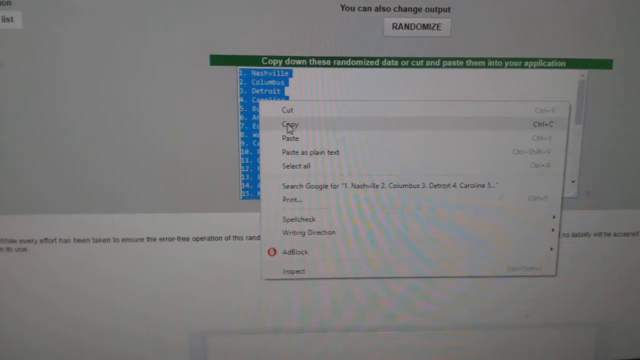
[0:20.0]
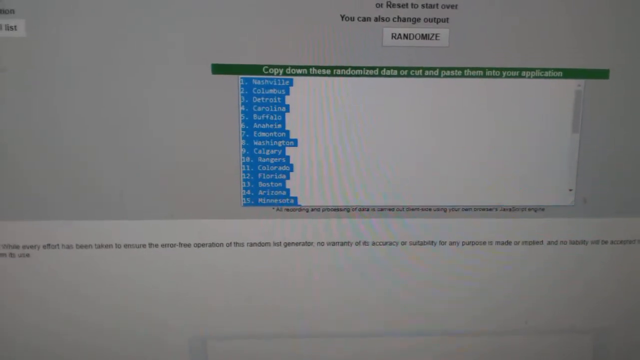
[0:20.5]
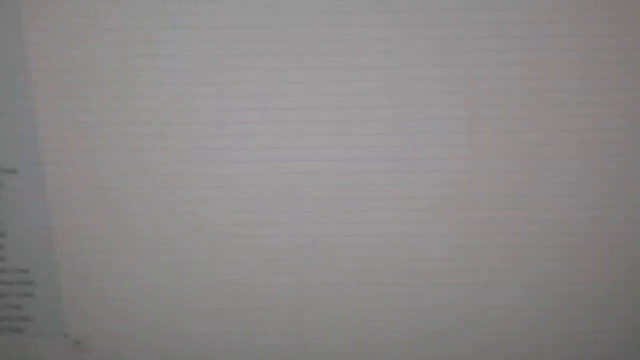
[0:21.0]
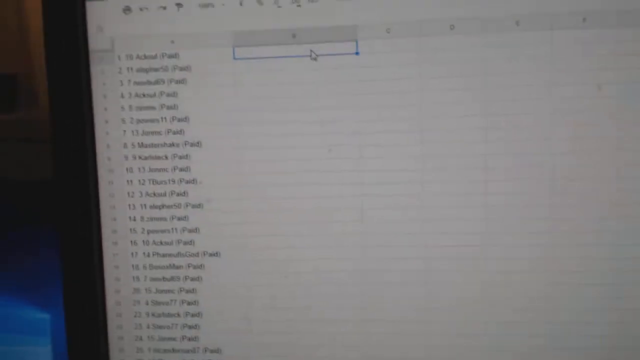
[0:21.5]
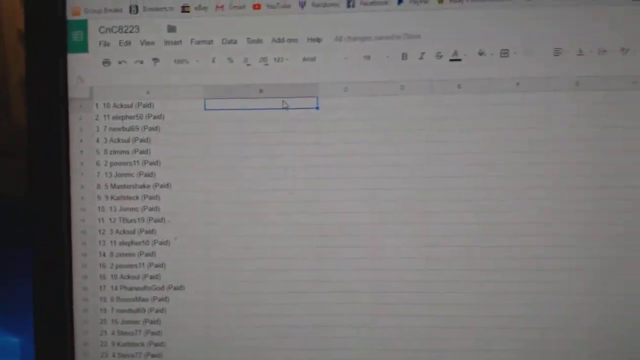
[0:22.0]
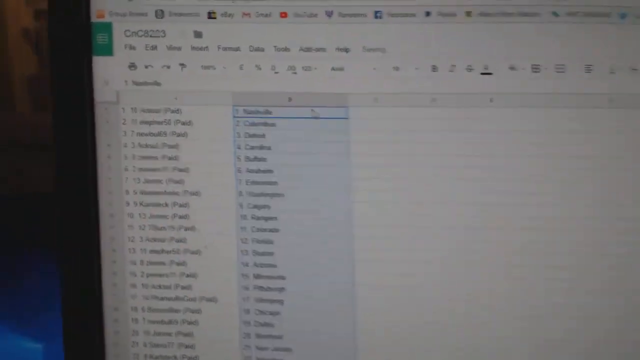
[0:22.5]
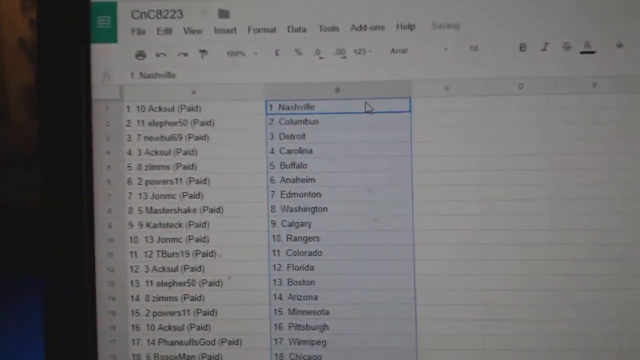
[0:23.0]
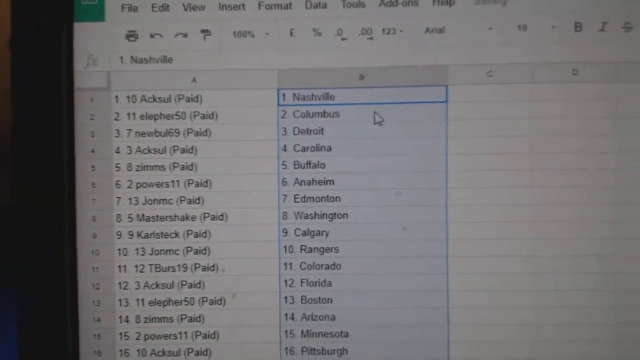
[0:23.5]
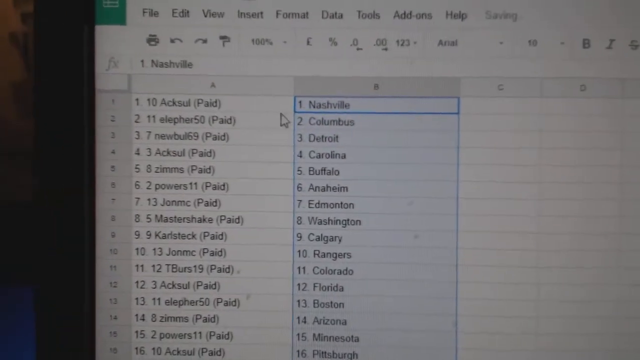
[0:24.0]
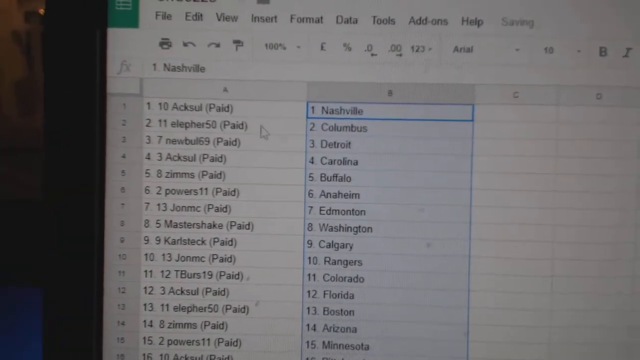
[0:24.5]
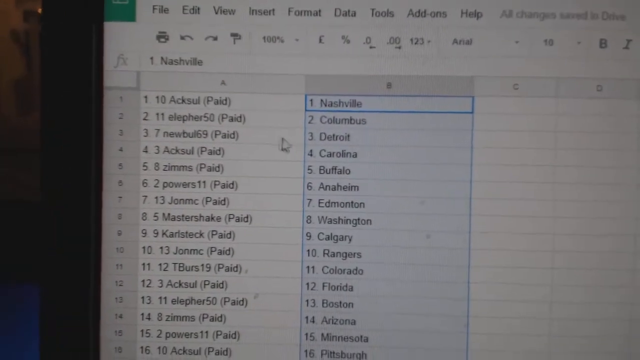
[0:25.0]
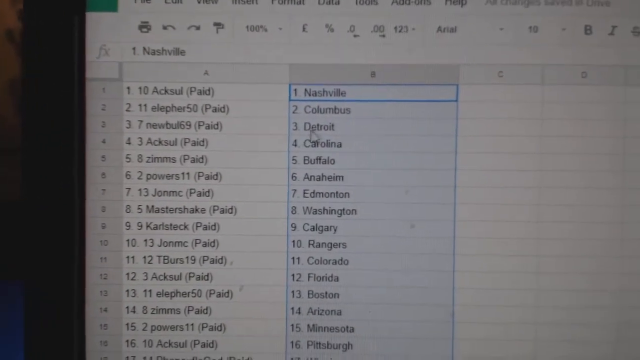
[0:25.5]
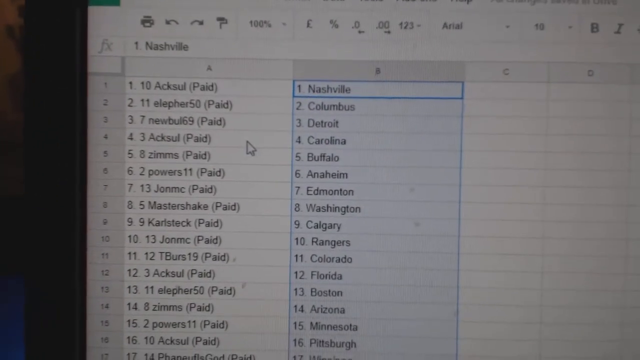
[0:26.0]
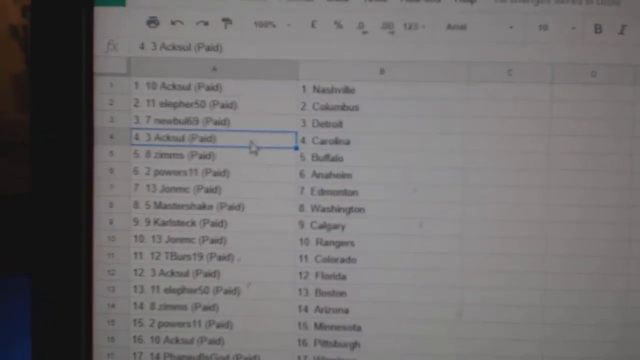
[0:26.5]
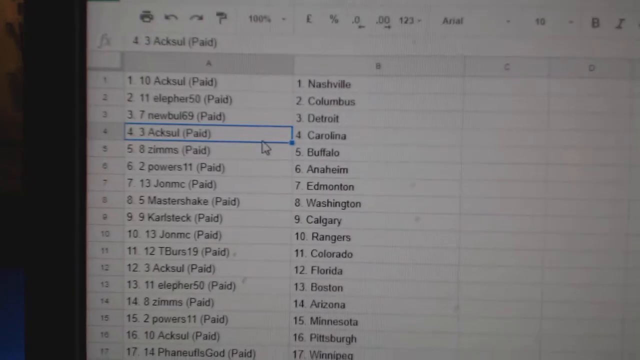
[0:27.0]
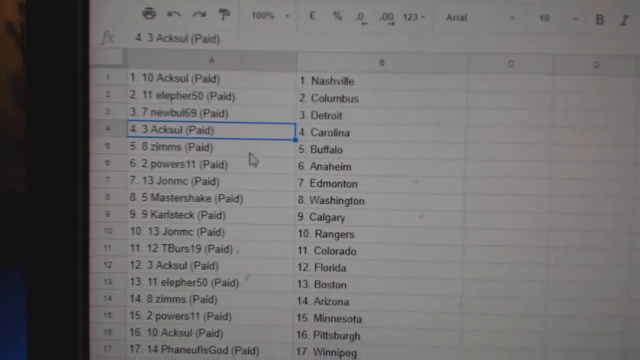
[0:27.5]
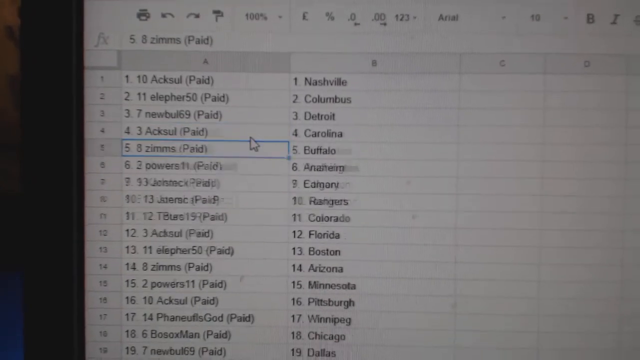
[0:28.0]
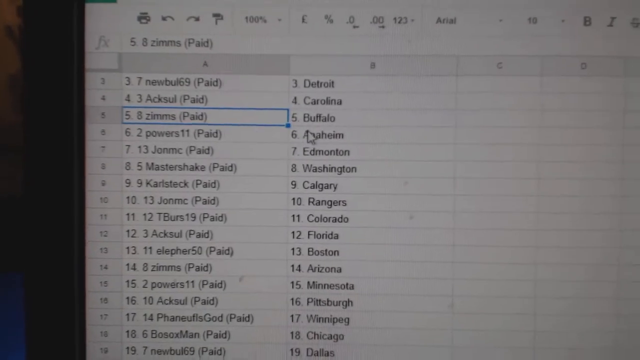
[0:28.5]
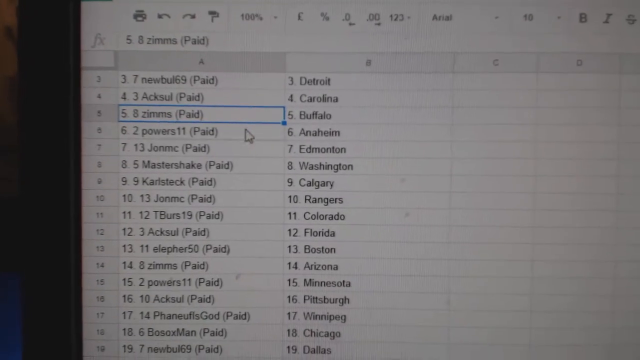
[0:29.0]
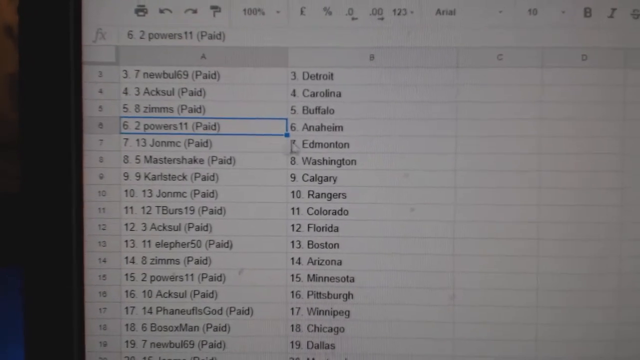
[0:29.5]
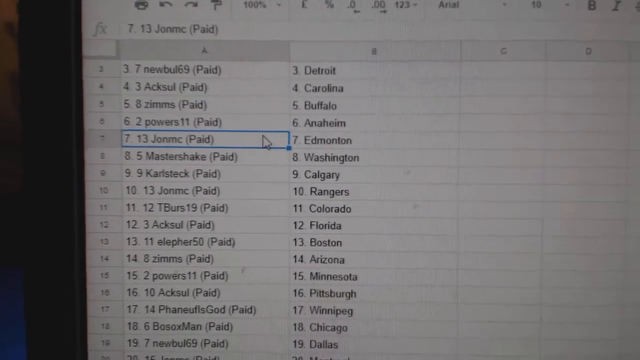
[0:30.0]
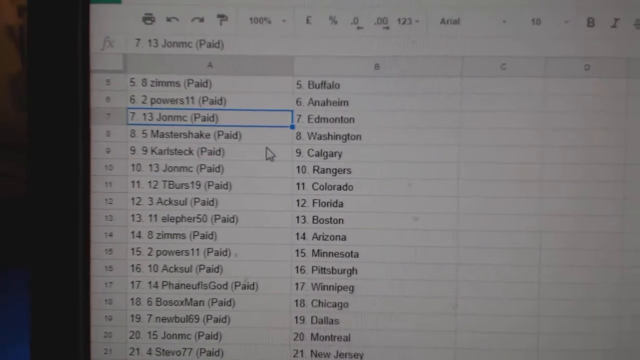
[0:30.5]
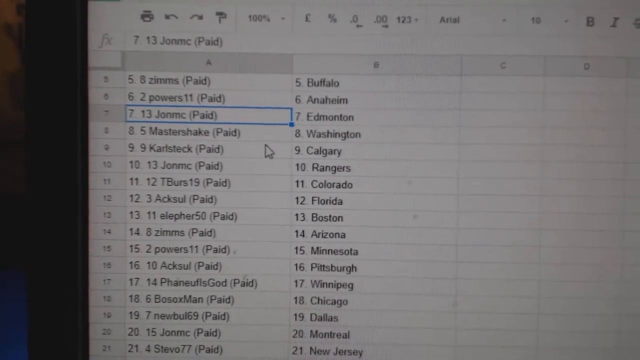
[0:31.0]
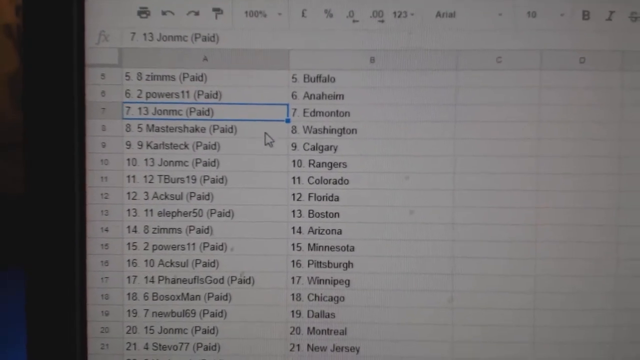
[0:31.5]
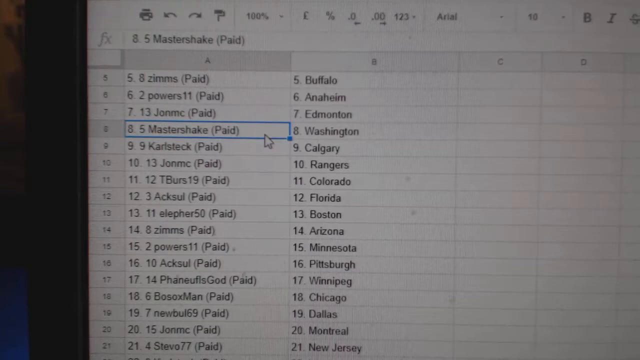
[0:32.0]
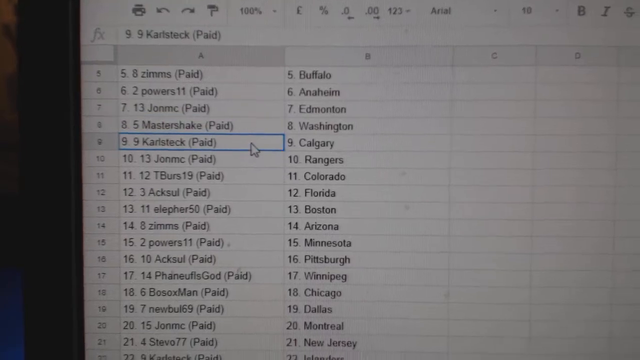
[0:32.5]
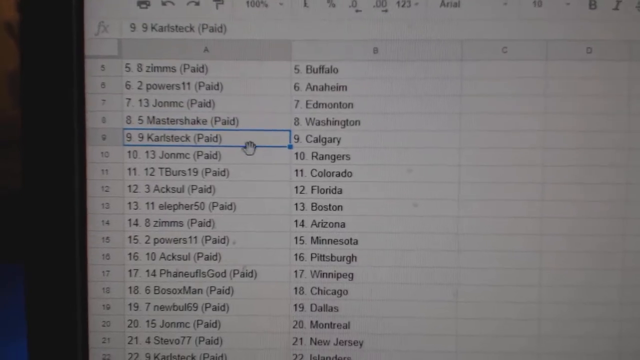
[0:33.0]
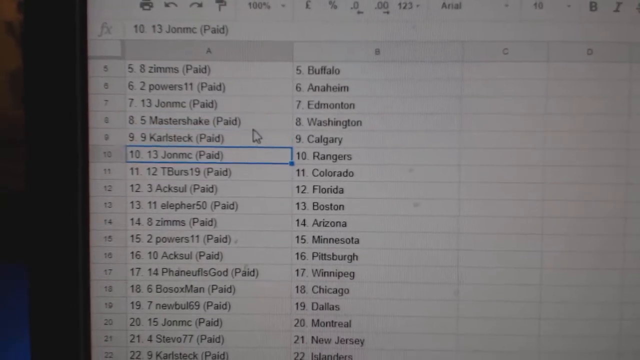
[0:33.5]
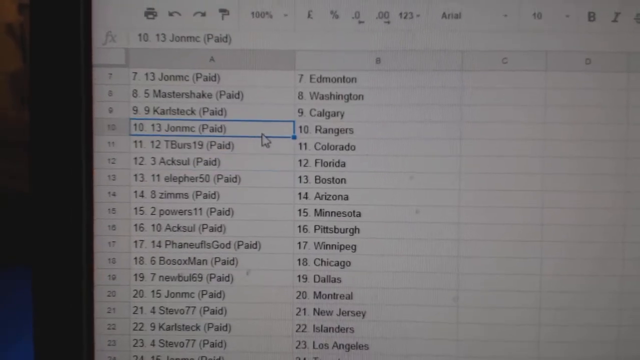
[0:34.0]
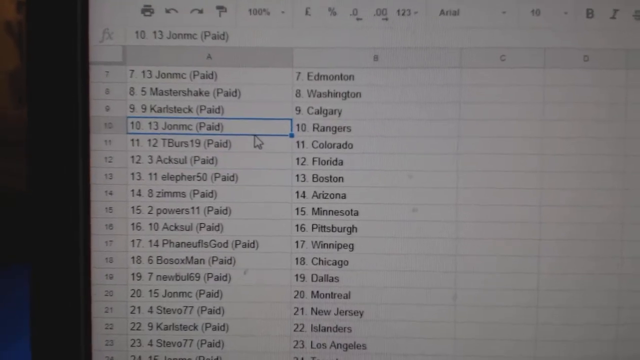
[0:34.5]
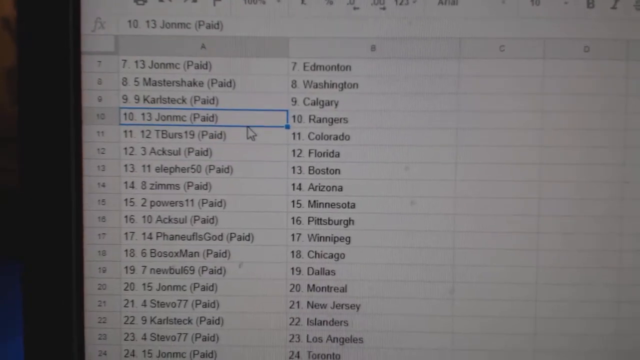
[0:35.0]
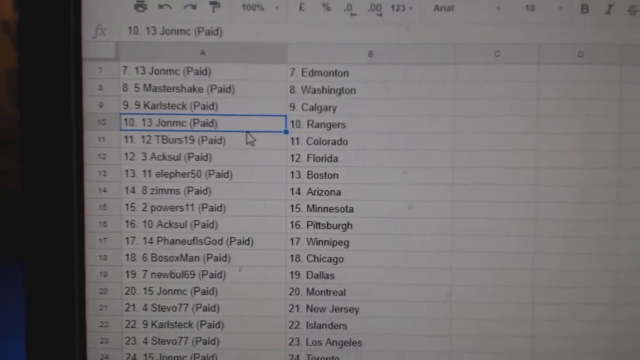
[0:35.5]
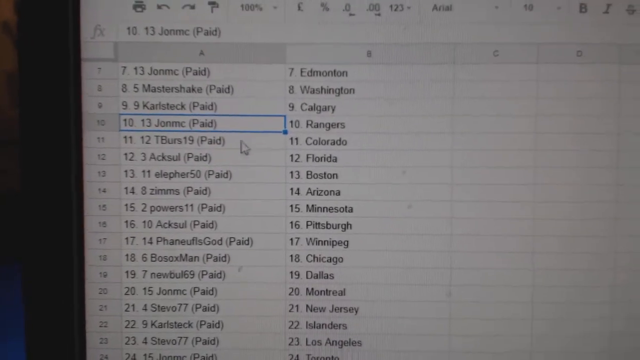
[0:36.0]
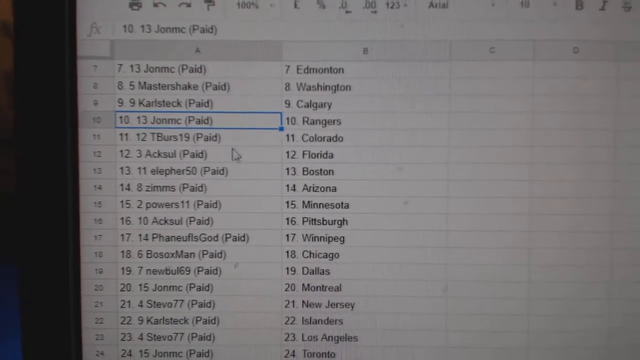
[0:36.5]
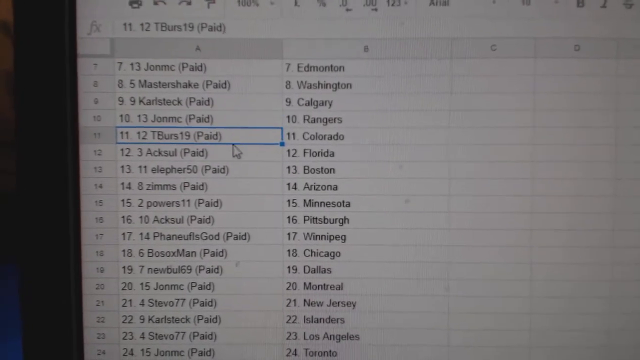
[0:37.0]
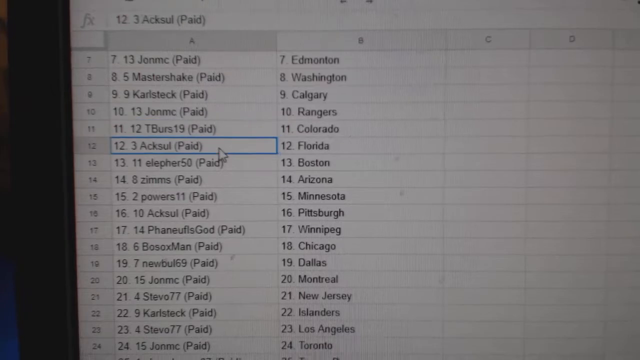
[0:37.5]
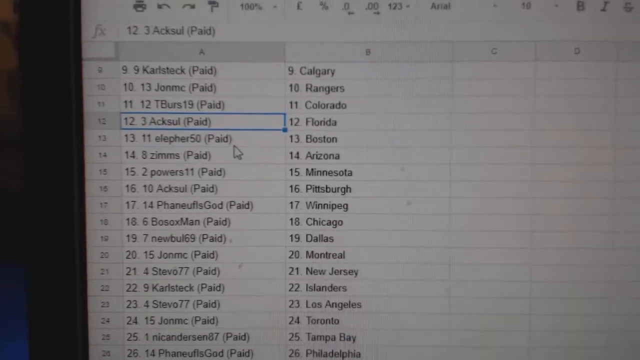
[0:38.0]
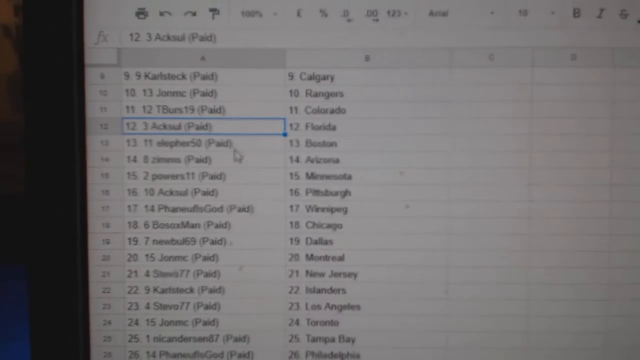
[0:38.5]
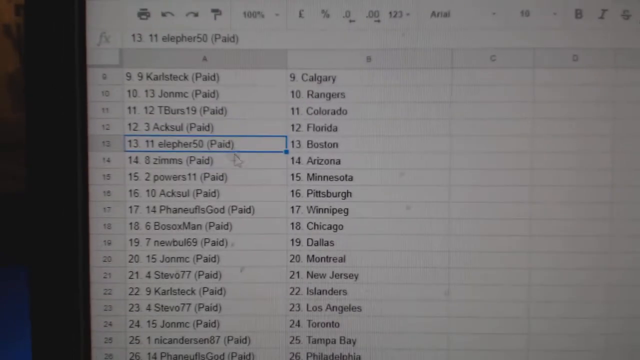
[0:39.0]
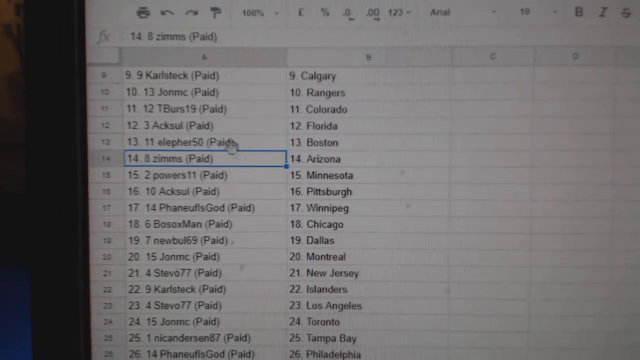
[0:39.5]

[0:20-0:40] Someone uses a computer, moving the mouse to scroll up and down a list. The list contains names with US states beside them, next to what look like orders, and in brackets the list says "paid", possibly marking customers who have paid, with the states apparently showing where each customer is based. The camera is quite shaky. Someone sitting at a desk scrolls down the names, apparently in a business setting, possibly checking which customers have paid.